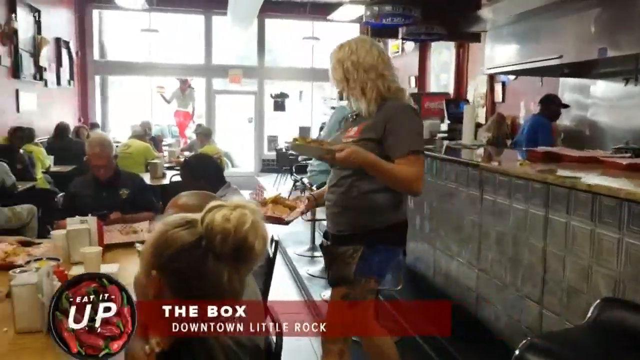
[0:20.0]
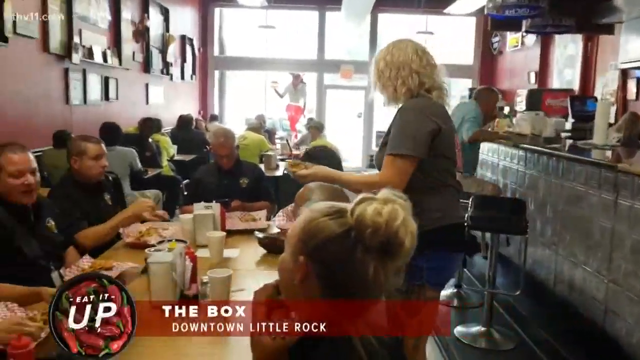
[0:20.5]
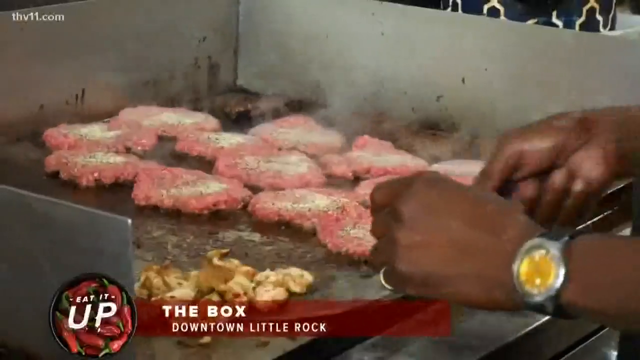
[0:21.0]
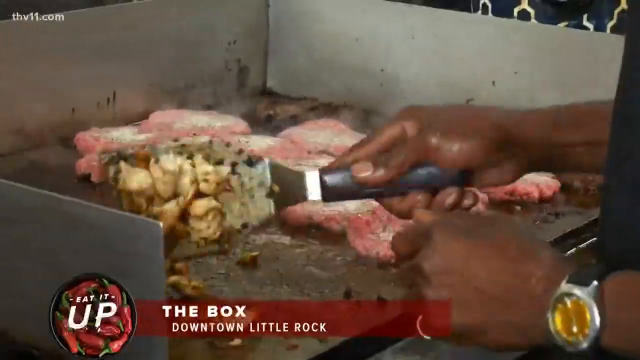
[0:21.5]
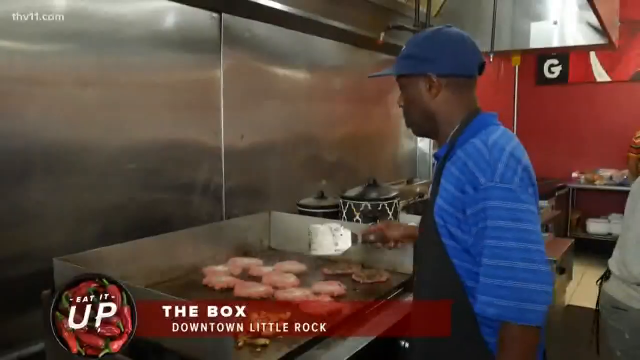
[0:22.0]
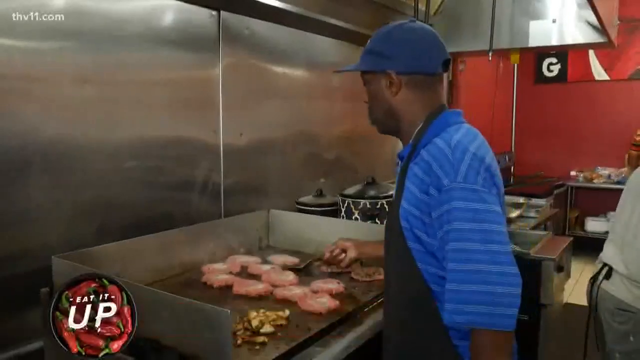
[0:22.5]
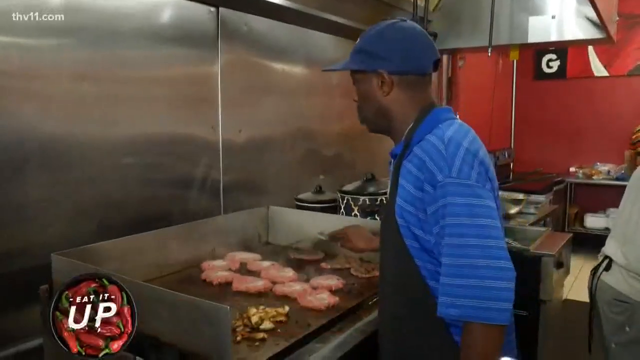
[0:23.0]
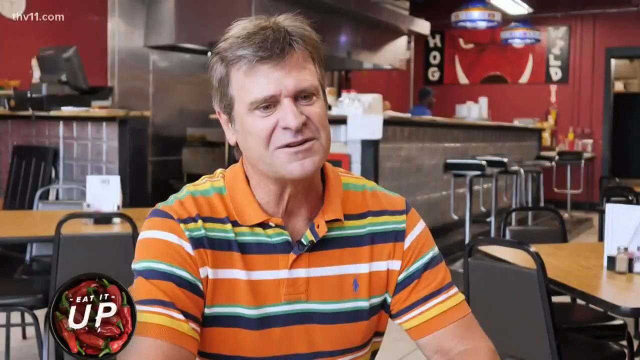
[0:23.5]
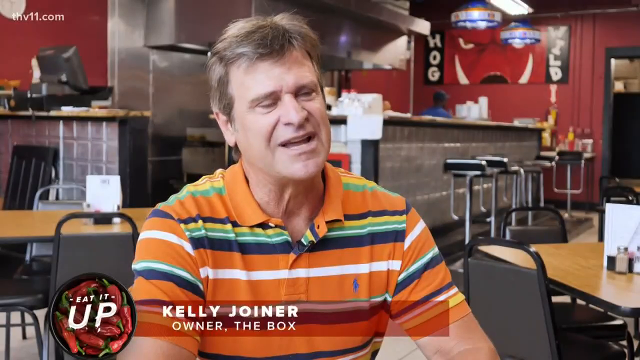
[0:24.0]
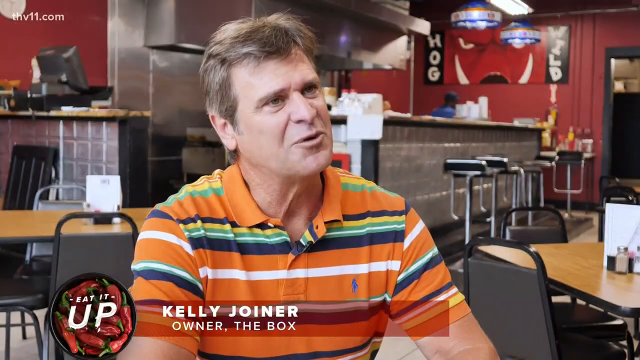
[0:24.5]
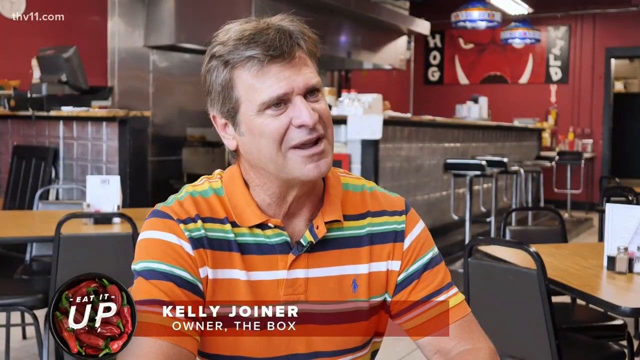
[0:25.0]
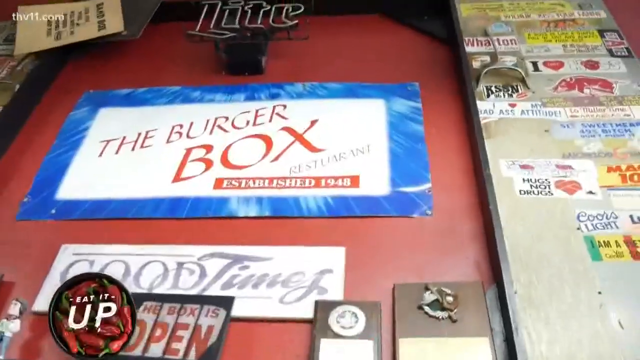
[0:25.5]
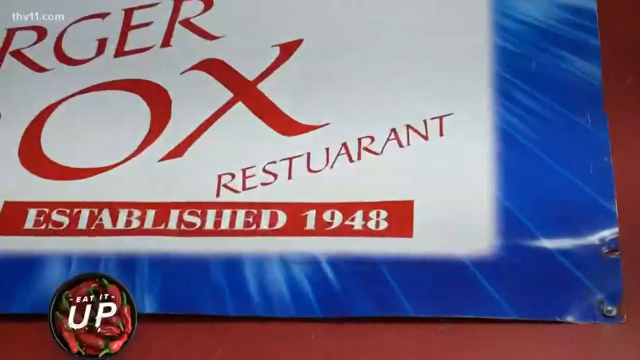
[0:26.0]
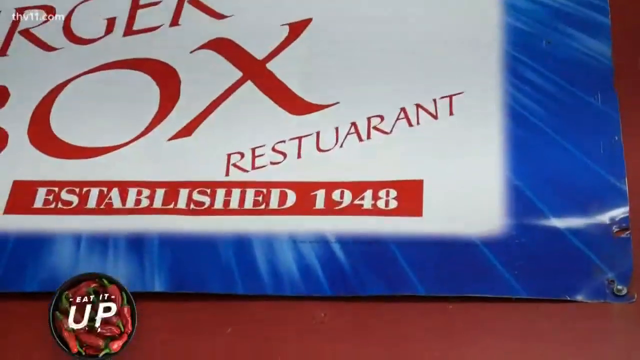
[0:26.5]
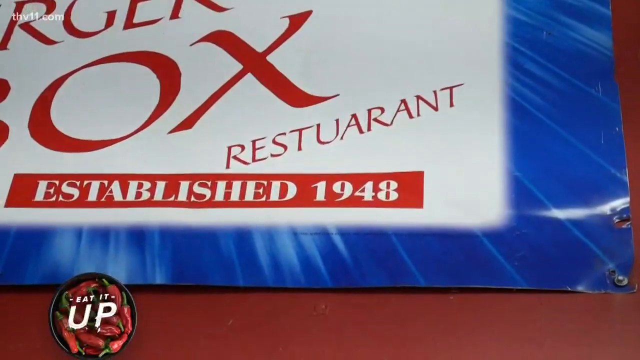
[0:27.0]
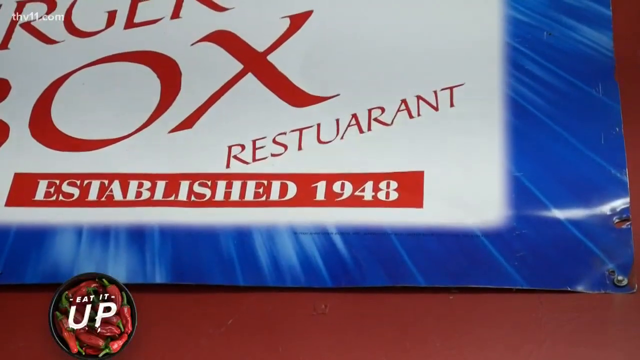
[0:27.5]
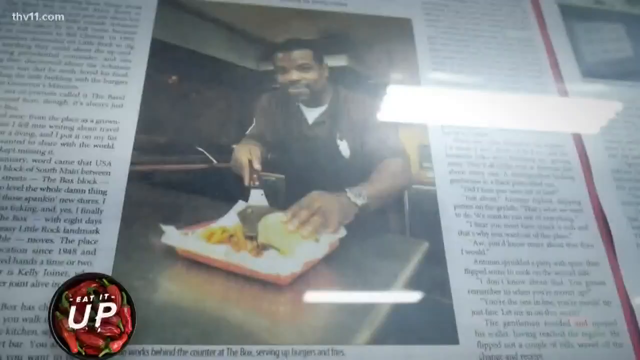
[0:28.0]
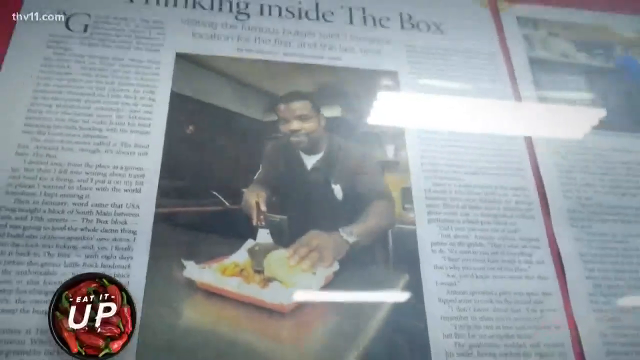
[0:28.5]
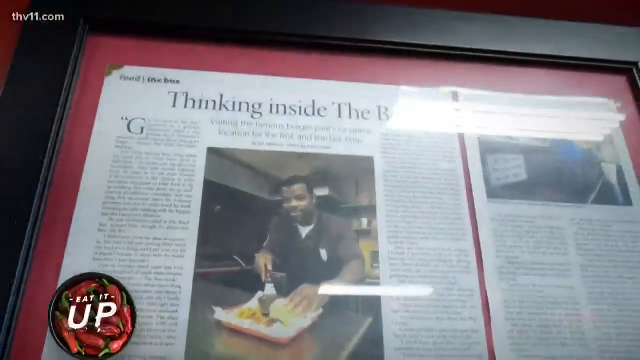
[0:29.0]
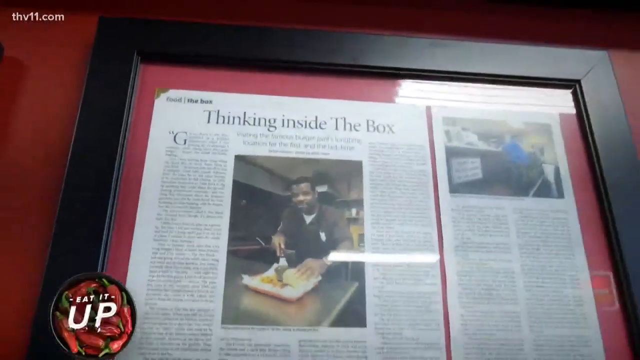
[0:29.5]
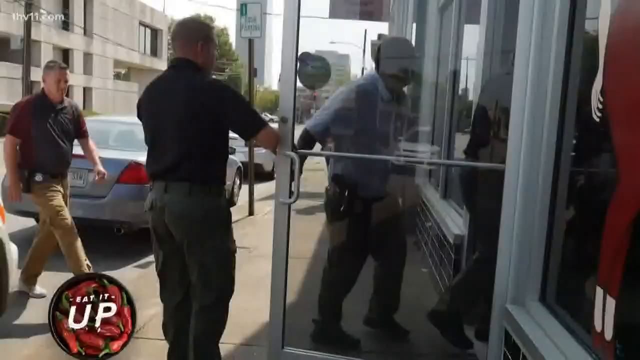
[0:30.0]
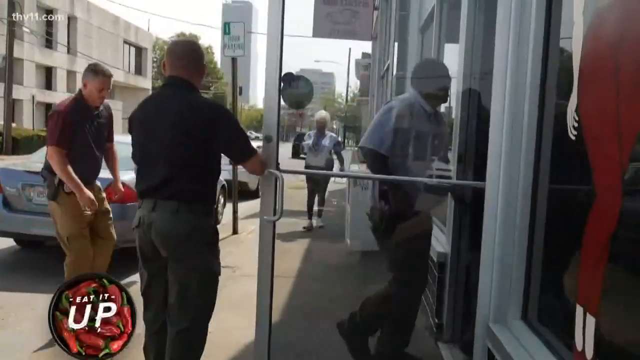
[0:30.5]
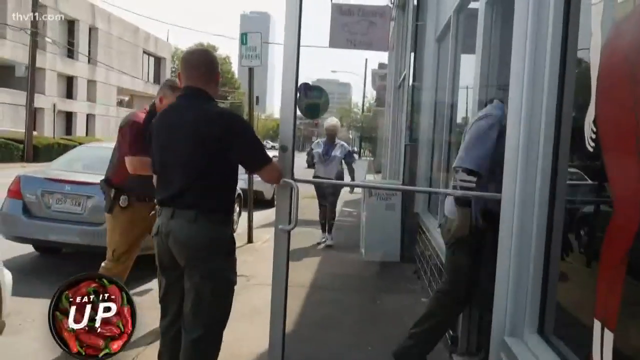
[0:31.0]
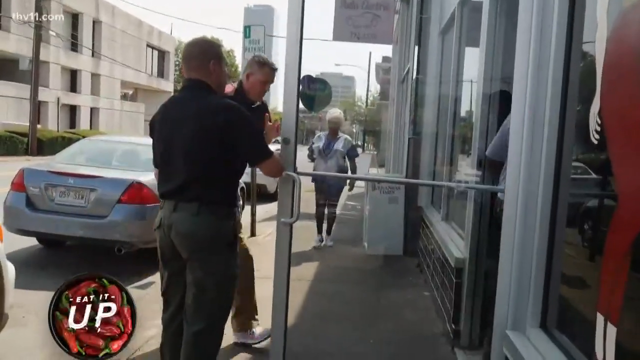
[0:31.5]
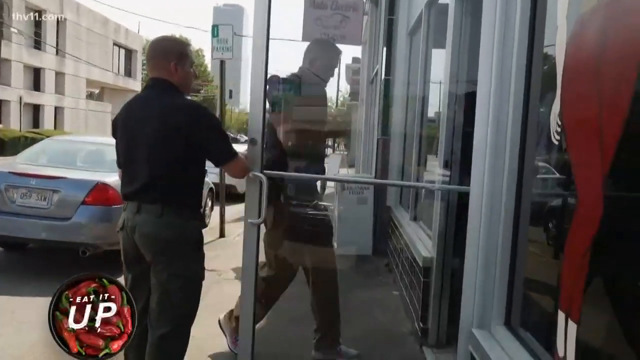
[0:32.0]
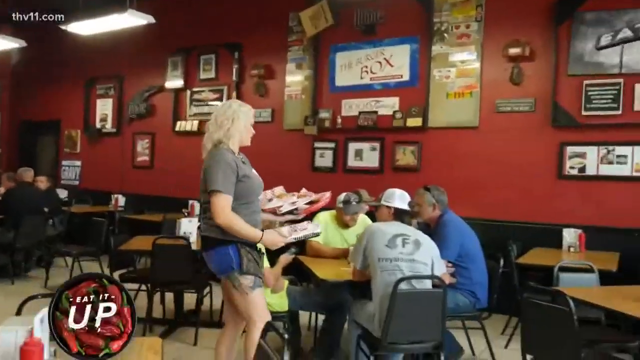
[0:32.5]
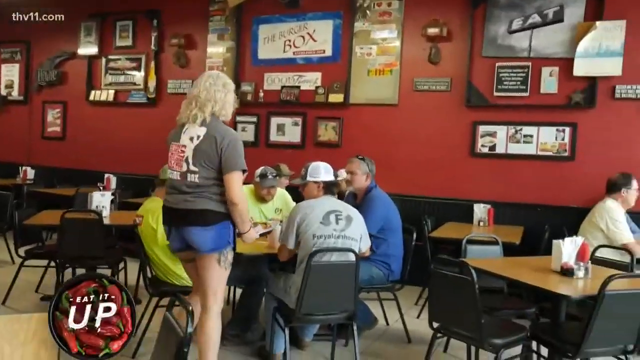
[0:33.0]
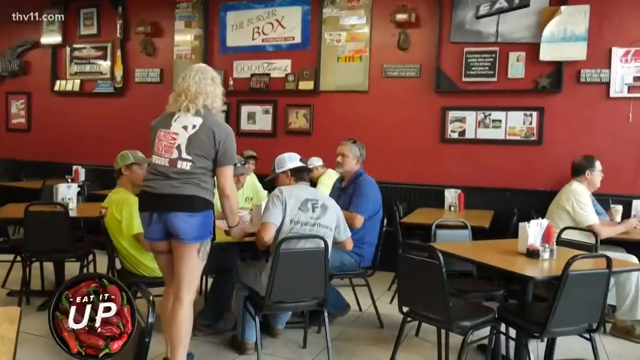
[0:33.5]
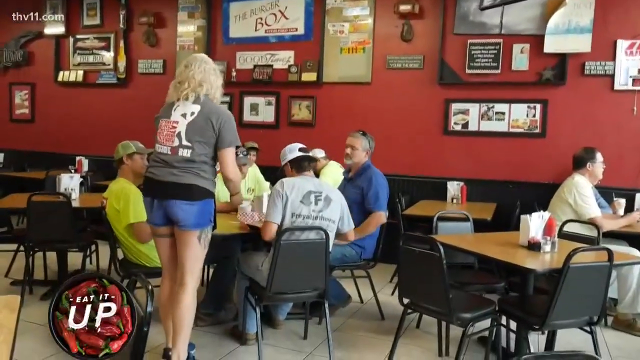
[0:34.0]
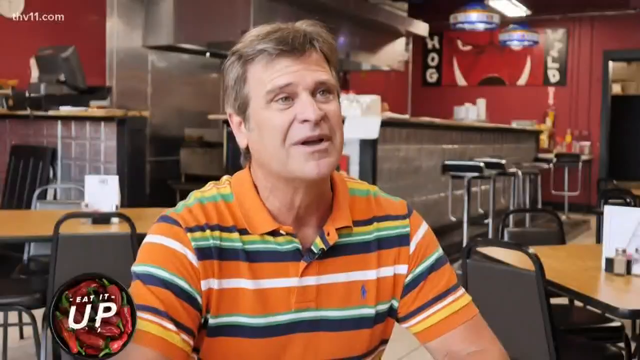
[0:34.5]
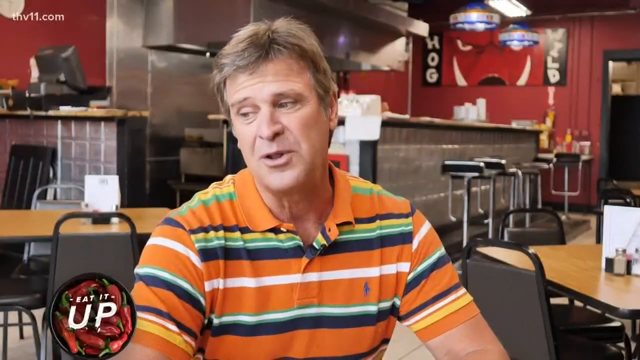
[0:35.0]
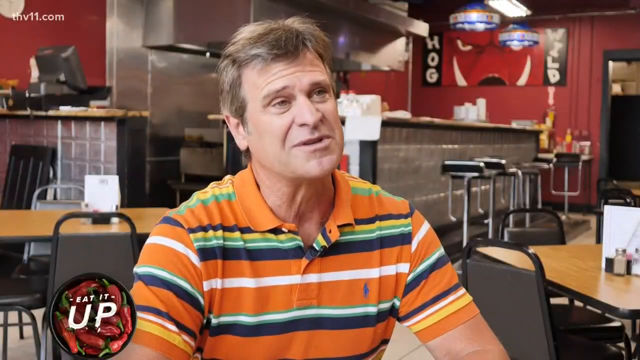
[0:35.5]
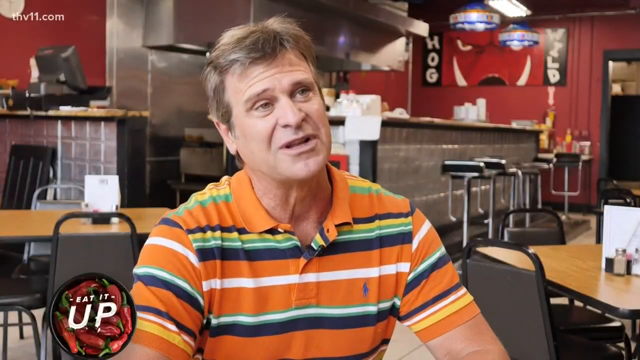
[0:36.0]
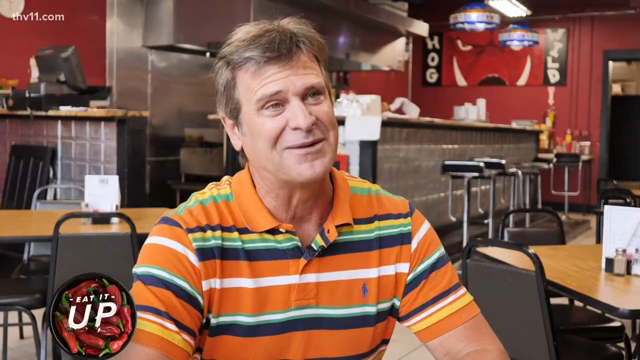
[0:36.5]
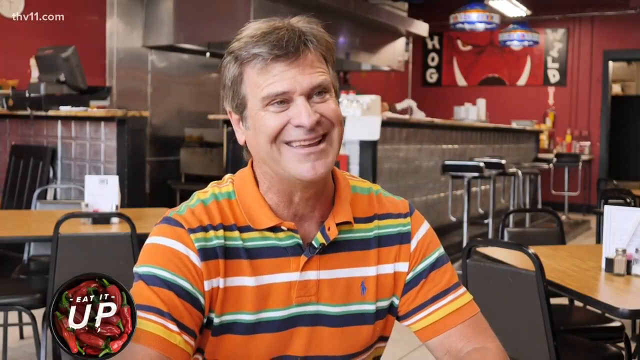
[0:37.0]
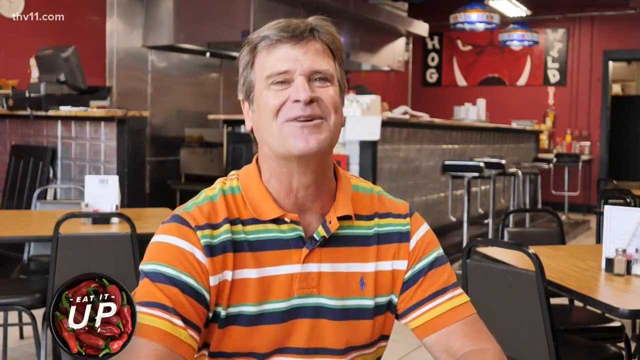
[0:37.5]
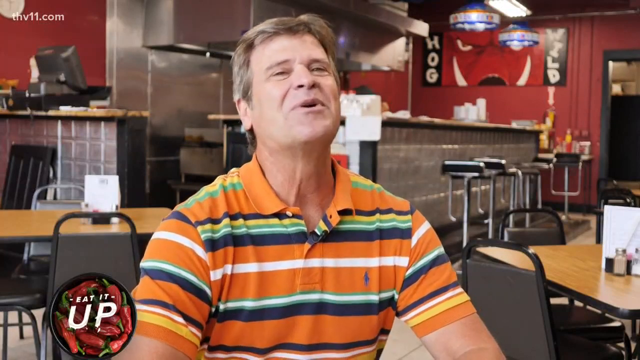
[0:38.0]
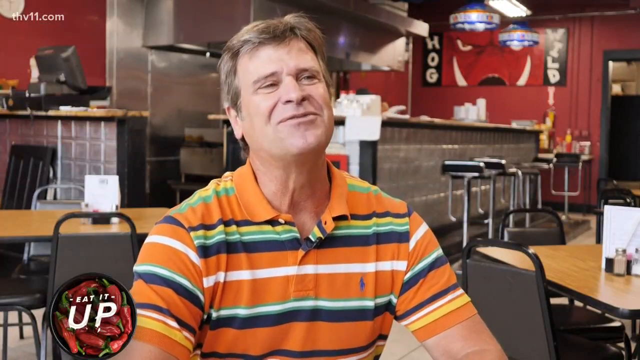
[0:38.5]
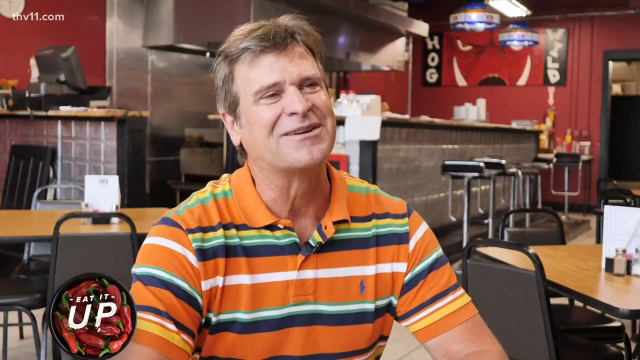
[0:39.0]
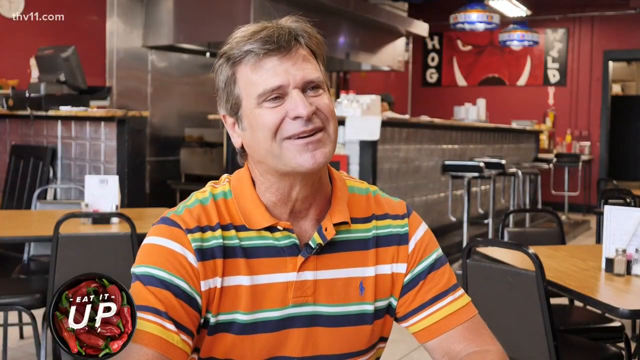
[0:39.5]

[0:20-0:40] The owner of The Box, Kelly Joyner, appears. He wears a striped shirt, has short hair, and looks at the camera as he talks about his restaurant. "Established 1948" is written in white on a red background. People go inside the restaurant, and a waitress serves the people in it. She has blonde hair and wears a denim shirt and a gray T-shirt. The inside of the restaurant is red, with a red wall and chairs. The waitress takes orders. A chef makes patties, turning them. Someone opens the door for clients coming into the restaurant to buy food. The owner seems happy as he talks about The Box.